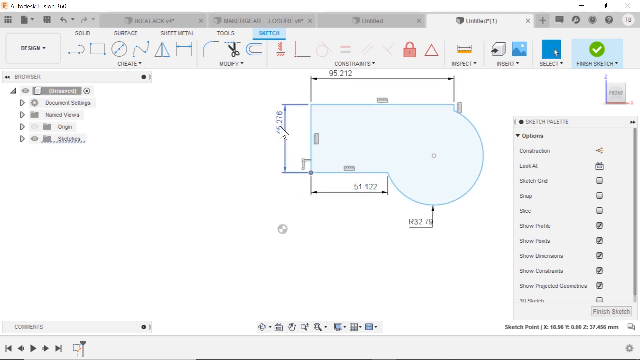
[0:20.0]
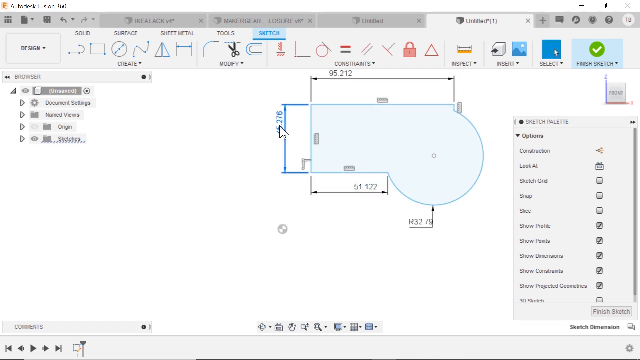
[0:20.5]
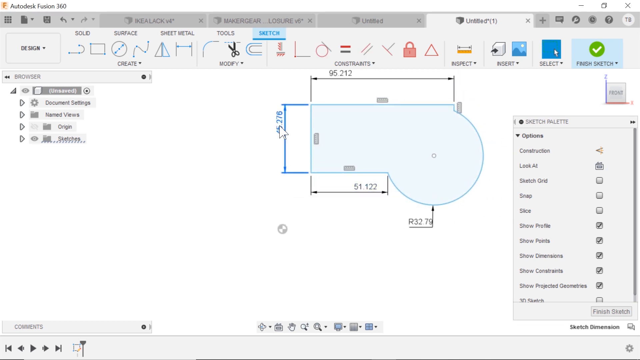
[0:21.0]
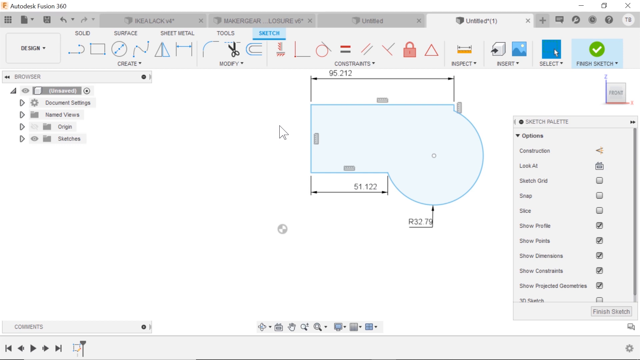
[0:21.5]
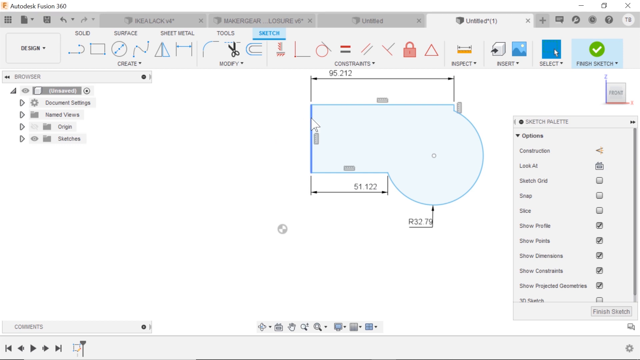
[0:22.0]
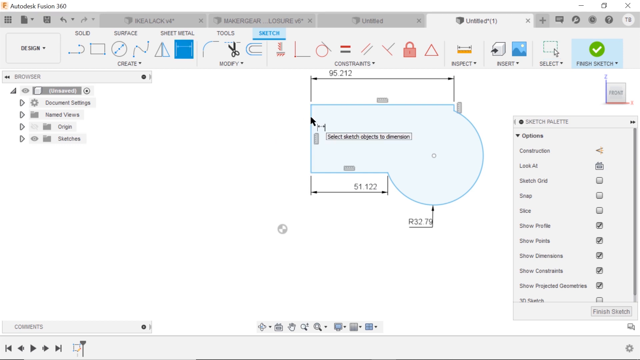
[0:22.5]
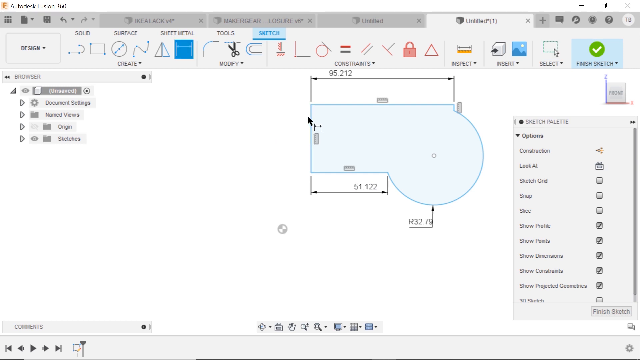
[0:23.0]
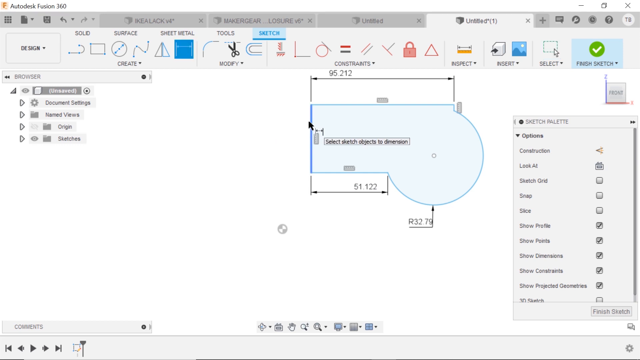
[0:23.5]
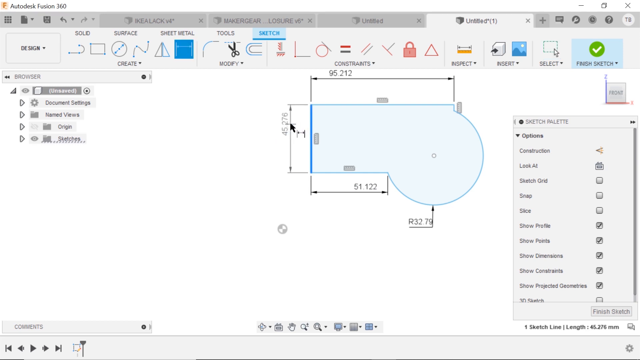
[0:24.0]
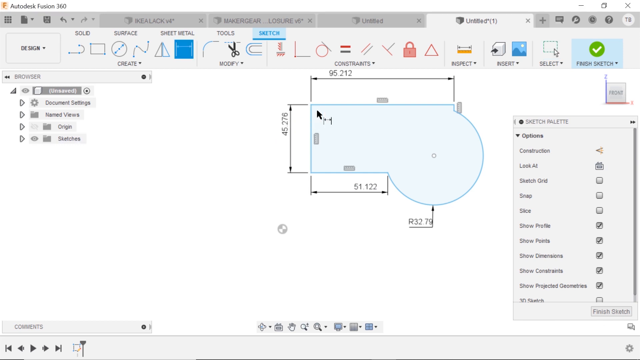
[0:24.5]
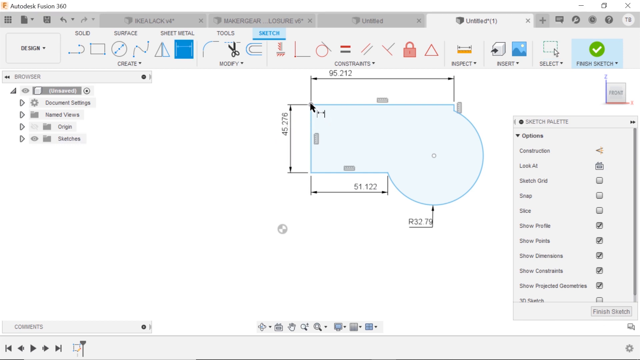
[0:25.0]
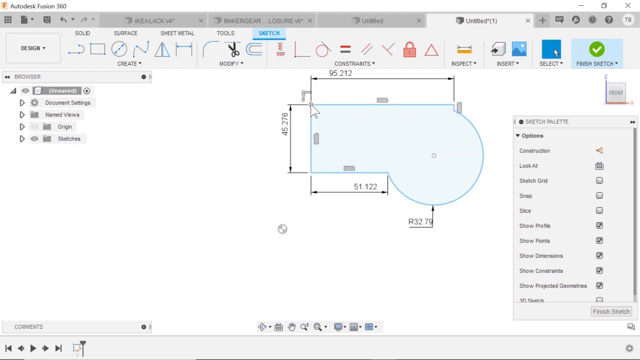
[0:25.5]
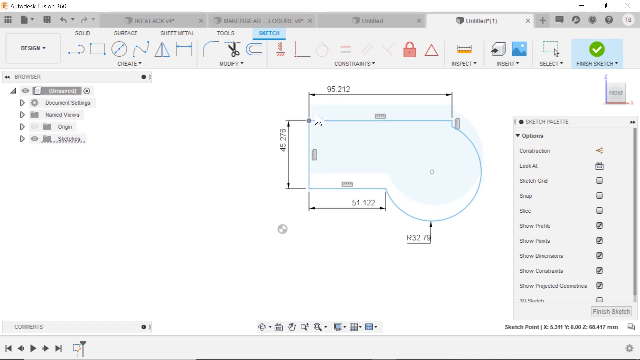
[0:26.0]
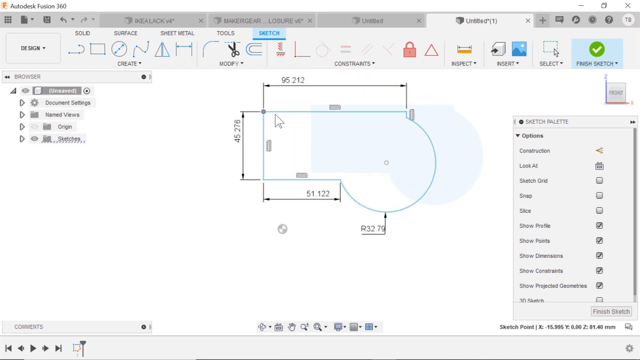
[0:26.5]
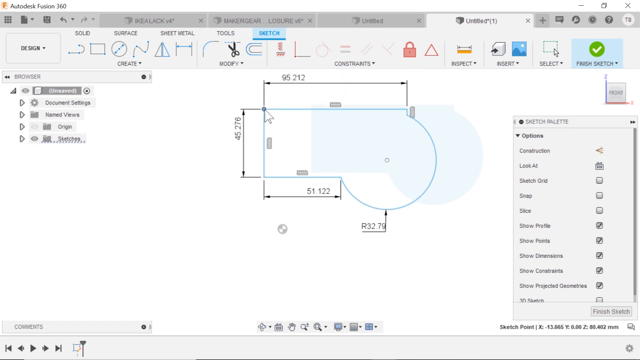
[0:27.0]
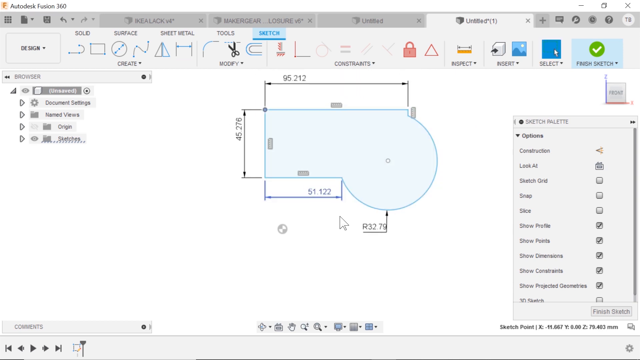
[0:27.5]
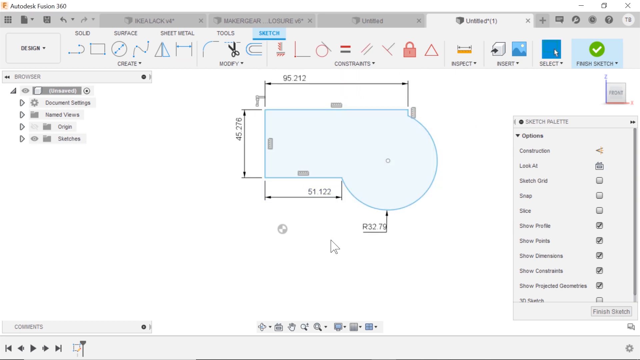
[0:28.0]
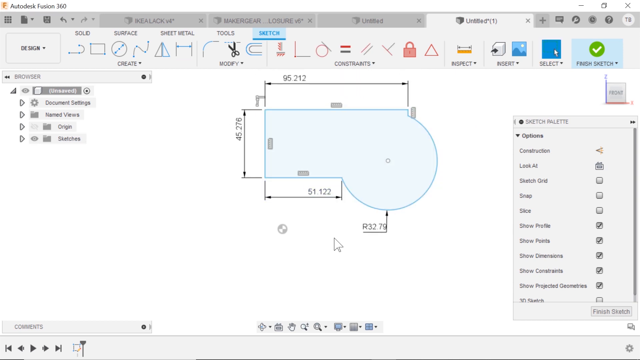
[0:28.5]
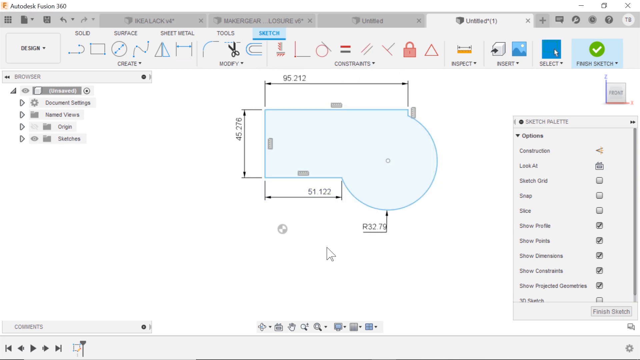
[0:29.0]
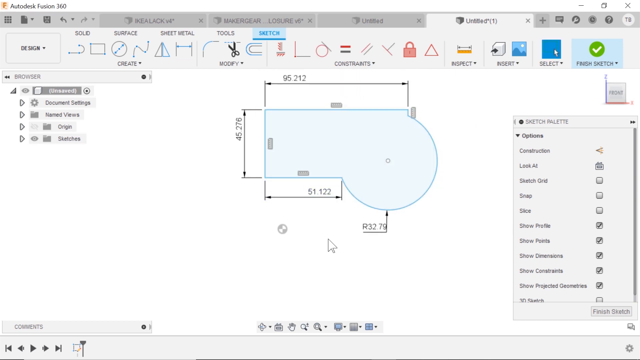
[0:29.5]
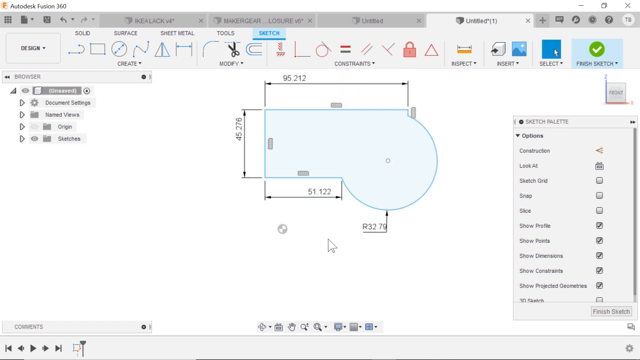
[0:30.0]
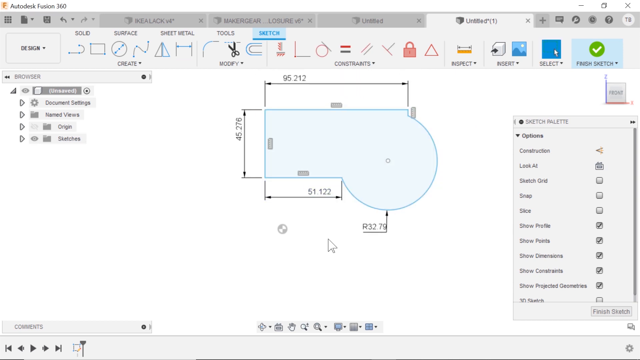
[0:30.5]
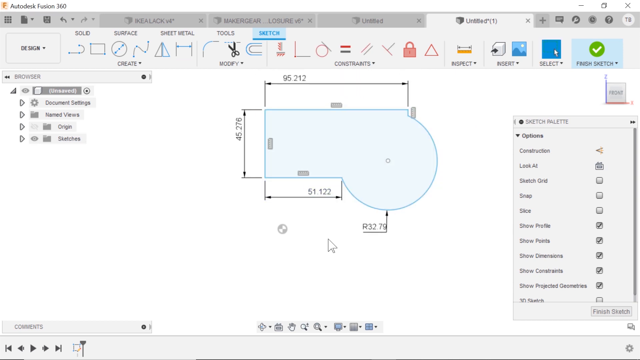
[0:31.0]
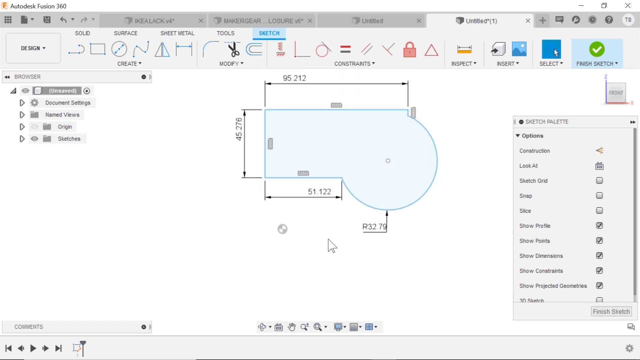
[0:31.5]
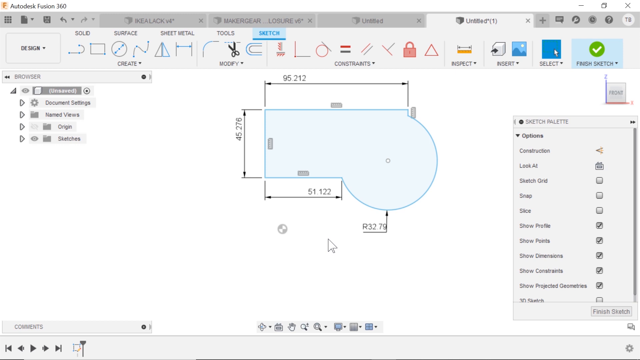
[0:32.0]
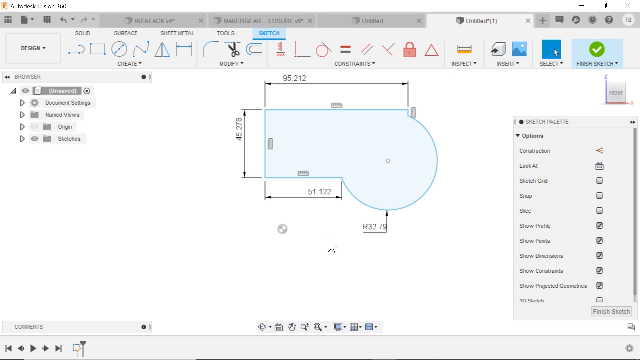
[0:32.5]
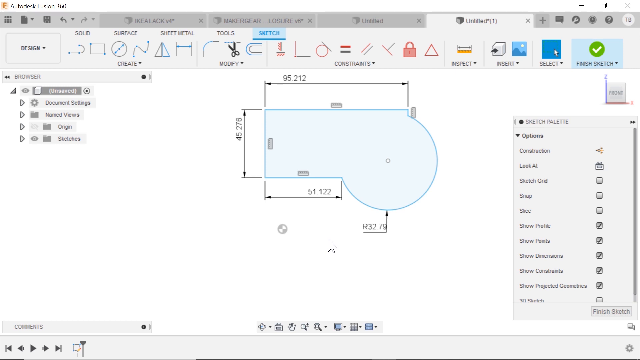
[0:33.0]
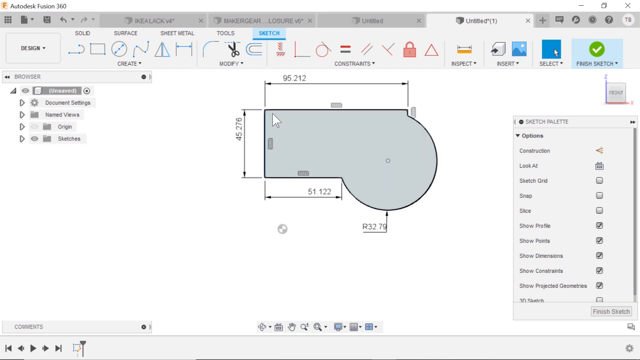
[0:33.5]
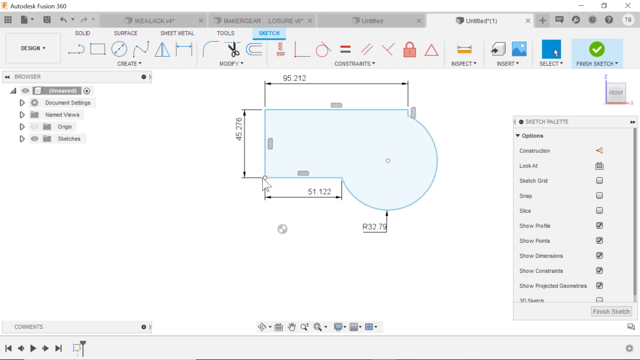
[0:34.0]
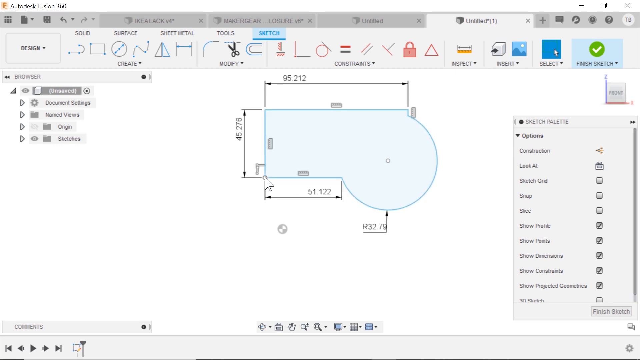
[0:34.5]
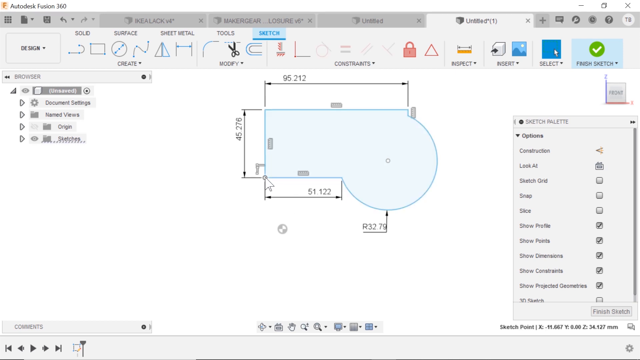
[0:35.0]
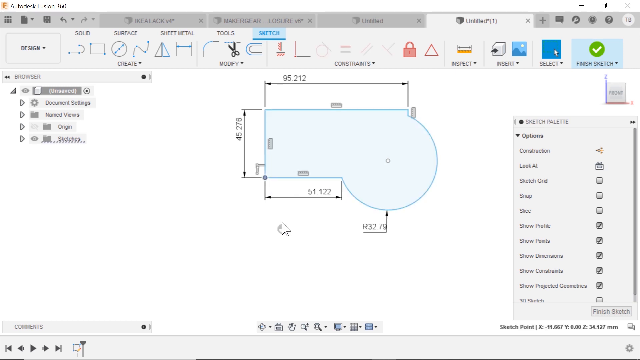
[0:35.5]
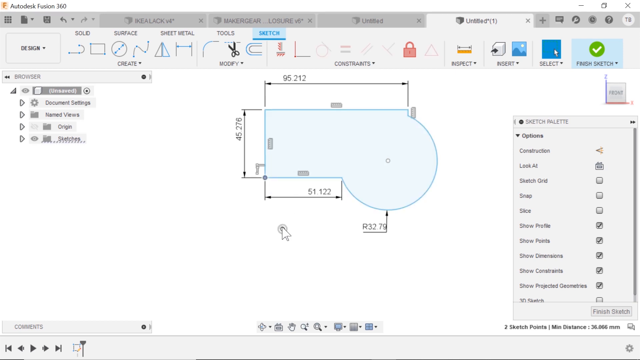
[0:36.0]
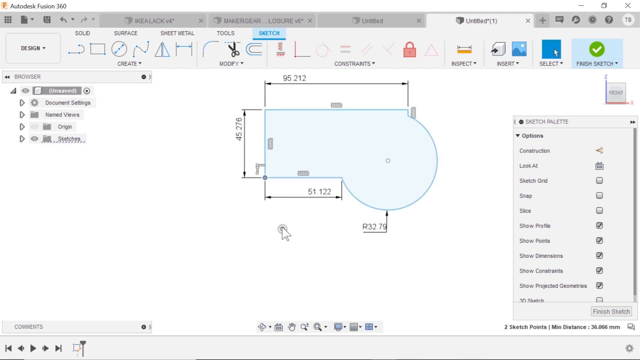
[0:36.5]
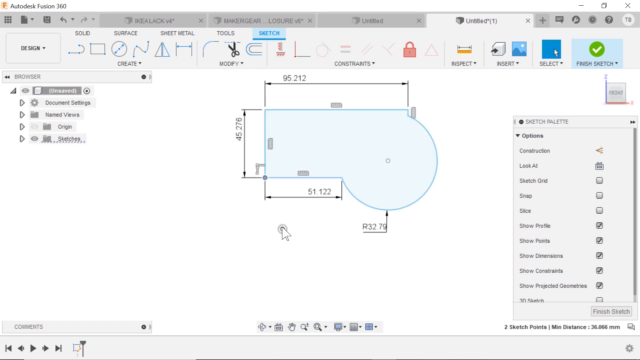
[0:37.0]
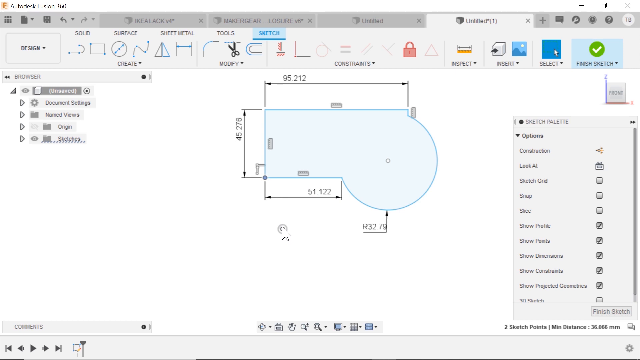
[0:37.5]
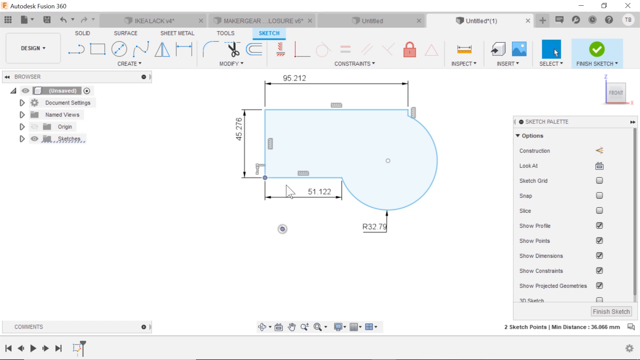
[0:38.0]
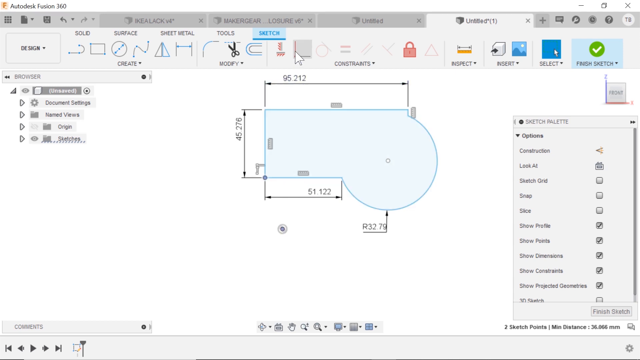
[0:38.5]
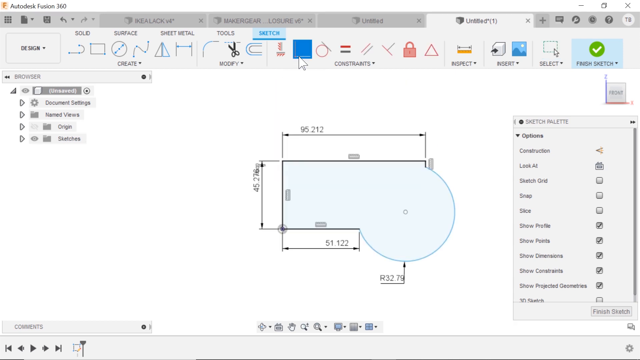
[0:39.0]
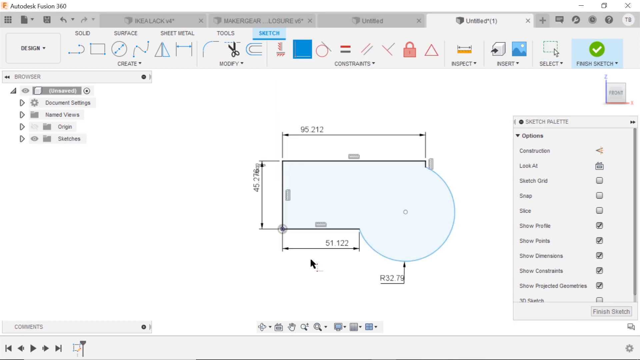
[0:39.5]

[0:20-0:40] The mouse clicks the left edge of the shape, and only that edge turns a darker blue than the others. Each side of the shape has a measurement; on the left side, for example, a vertical line with arrows on both ends shows a length of 45.276. The circle attached on the right has a dot in its middle marking its center. On the right side is the sketch palette, with checkbox options including "lock all," "sketch grid," "snap," "Slice," "Show Profile," "Show Points" and more. Some are checked, such as "Show Points" and "Show Dimensions," which is probably why the dimensions appear on the sides of the shape.